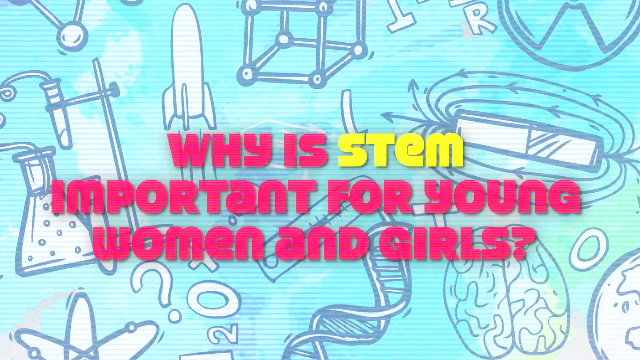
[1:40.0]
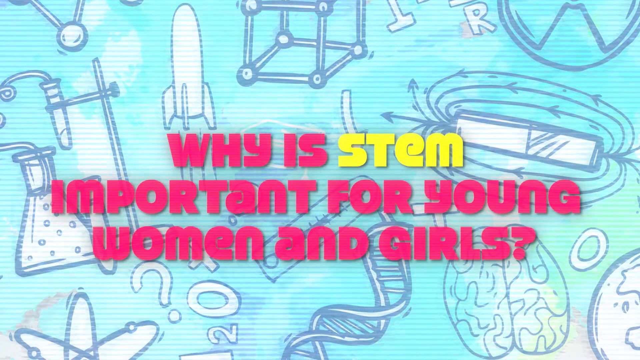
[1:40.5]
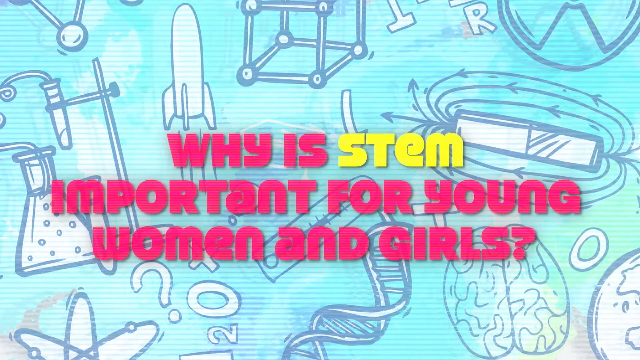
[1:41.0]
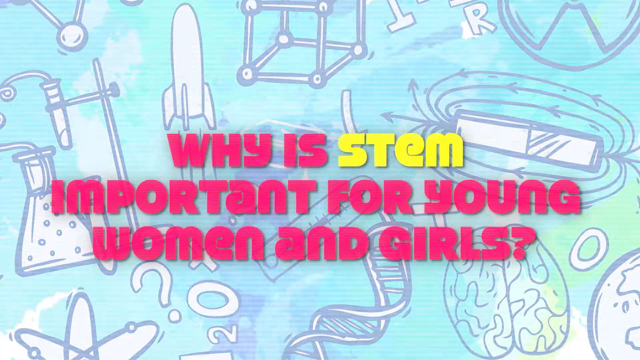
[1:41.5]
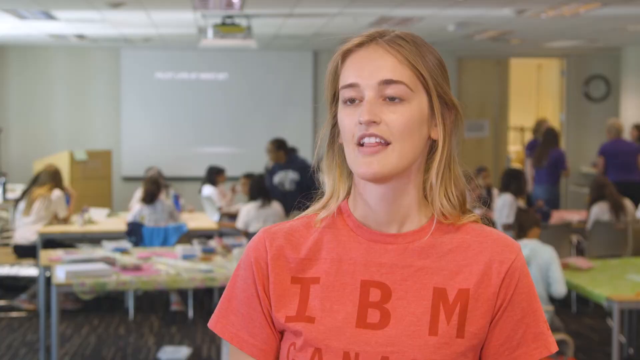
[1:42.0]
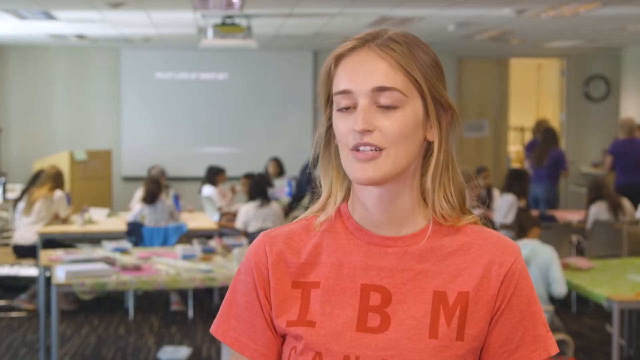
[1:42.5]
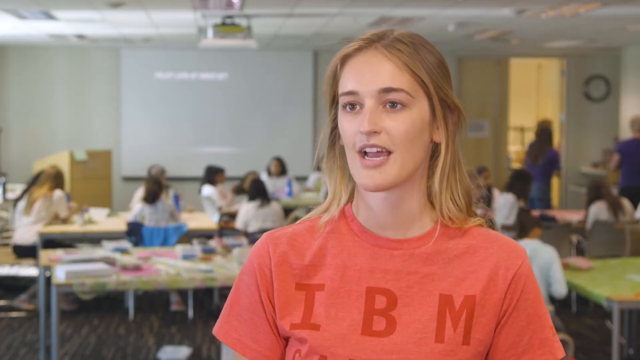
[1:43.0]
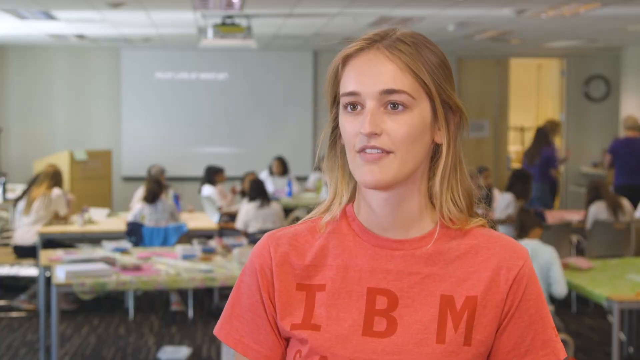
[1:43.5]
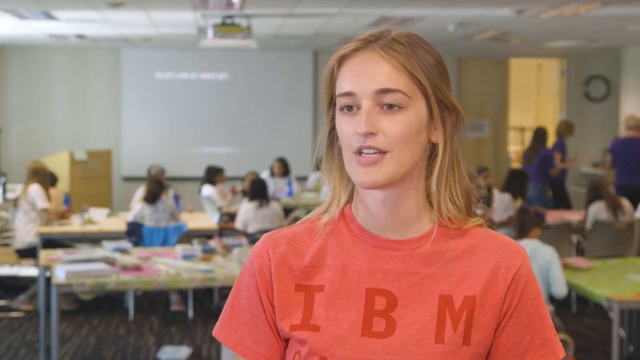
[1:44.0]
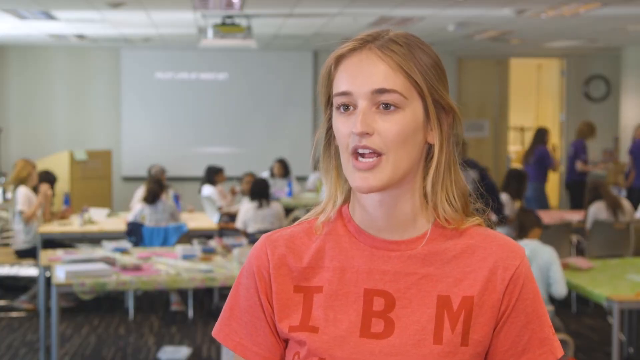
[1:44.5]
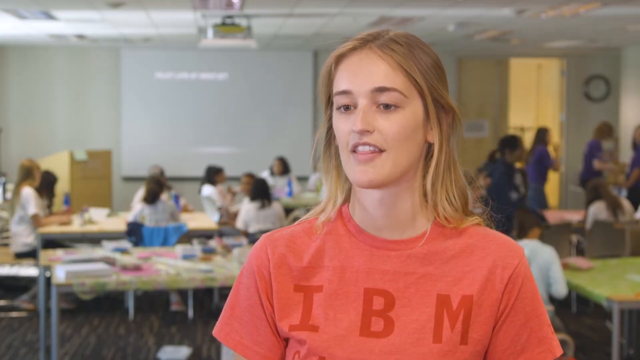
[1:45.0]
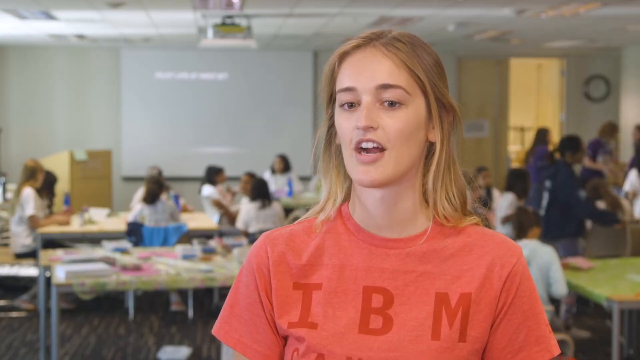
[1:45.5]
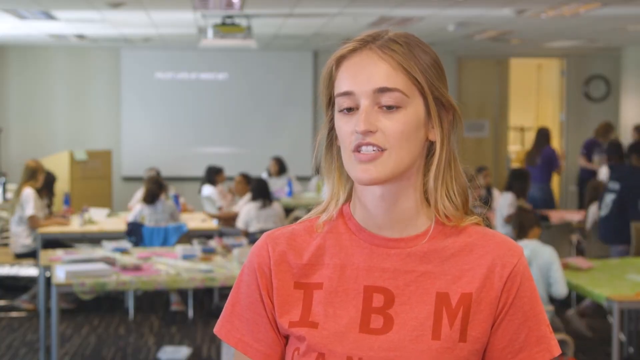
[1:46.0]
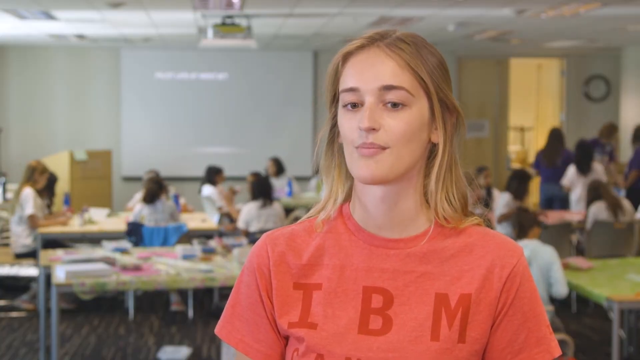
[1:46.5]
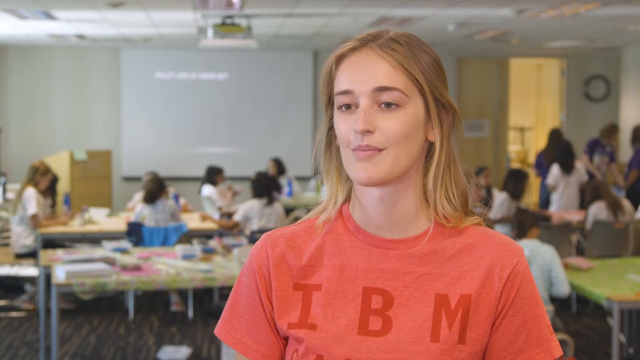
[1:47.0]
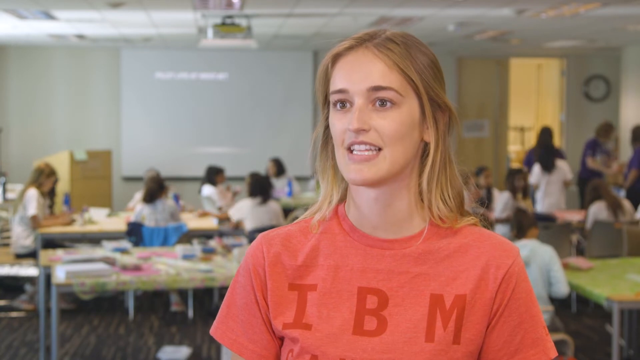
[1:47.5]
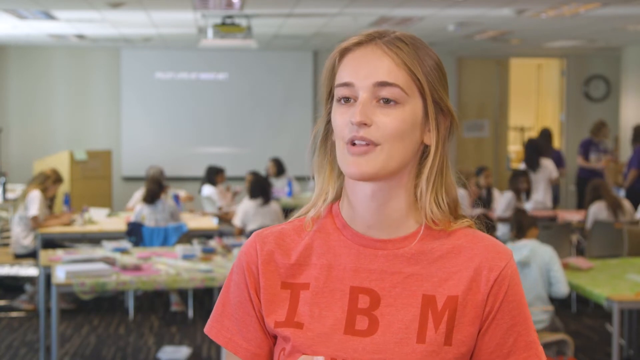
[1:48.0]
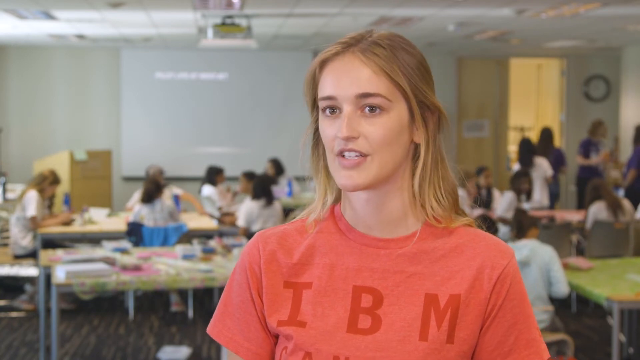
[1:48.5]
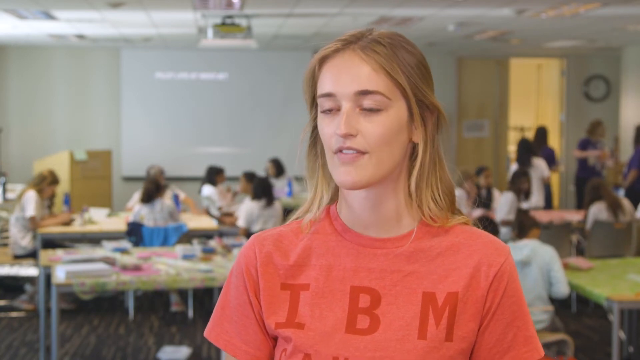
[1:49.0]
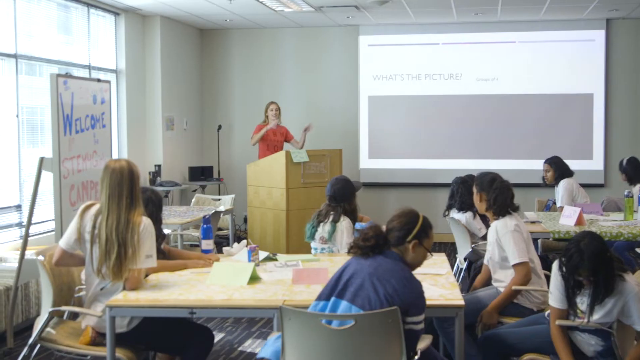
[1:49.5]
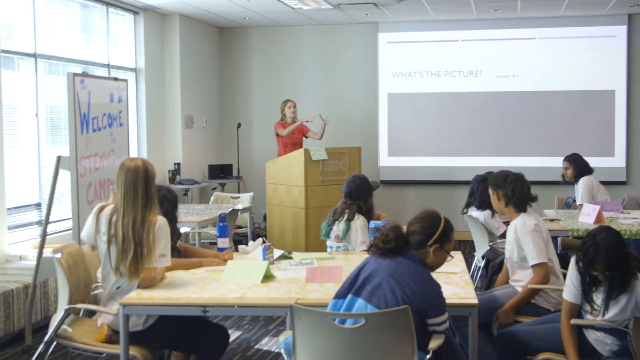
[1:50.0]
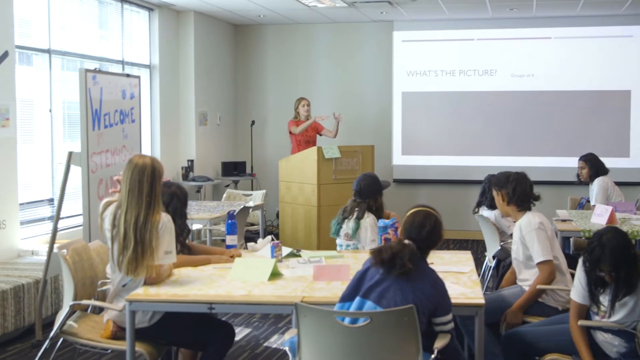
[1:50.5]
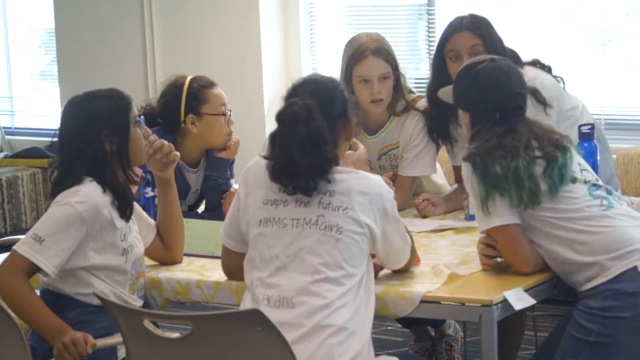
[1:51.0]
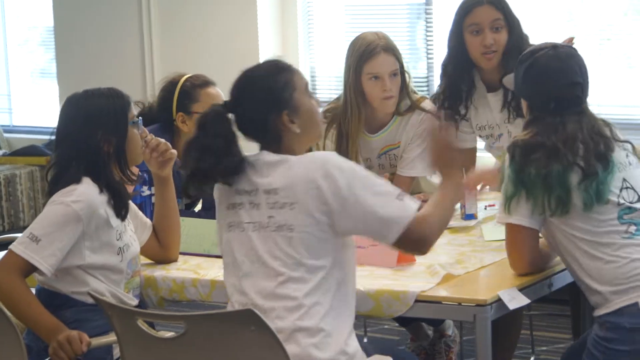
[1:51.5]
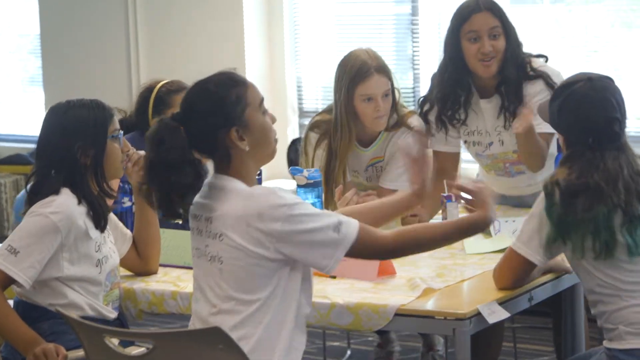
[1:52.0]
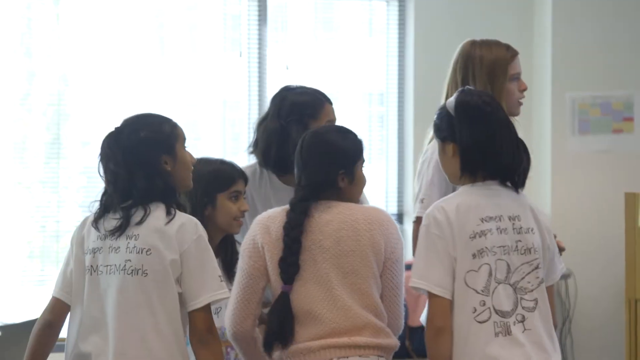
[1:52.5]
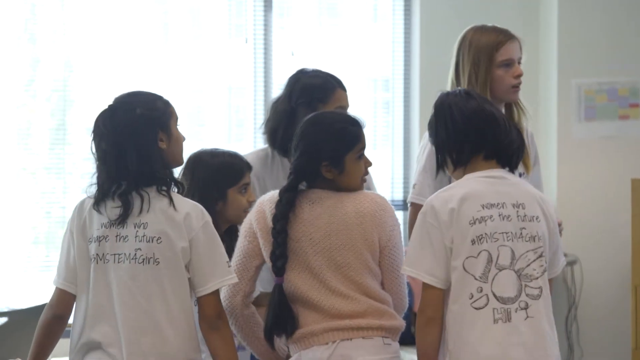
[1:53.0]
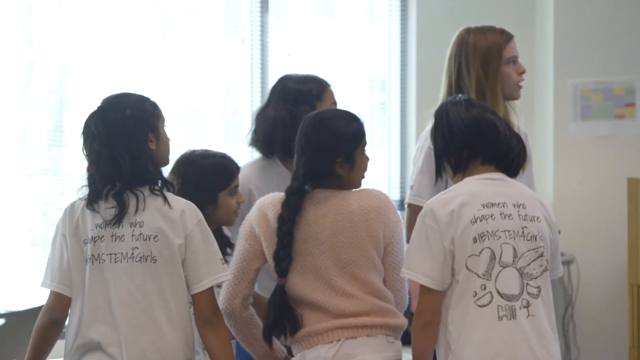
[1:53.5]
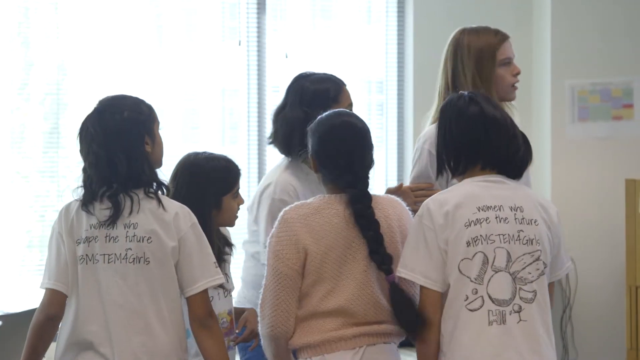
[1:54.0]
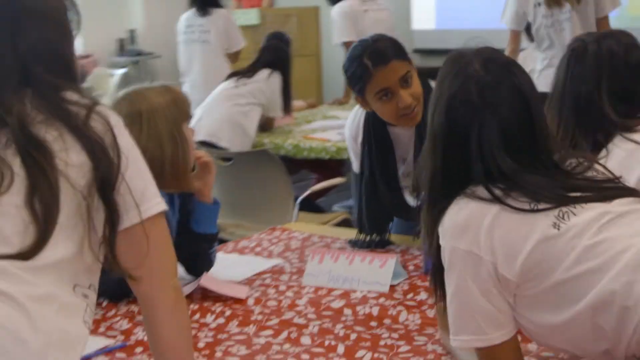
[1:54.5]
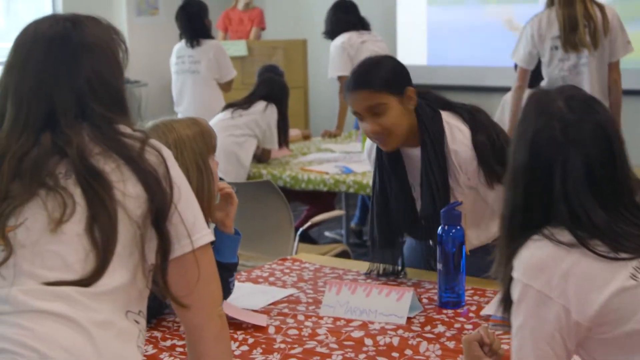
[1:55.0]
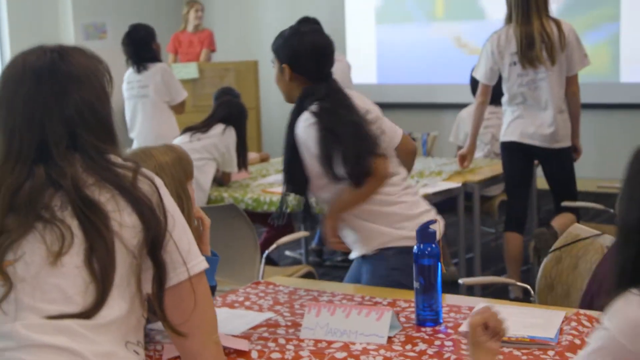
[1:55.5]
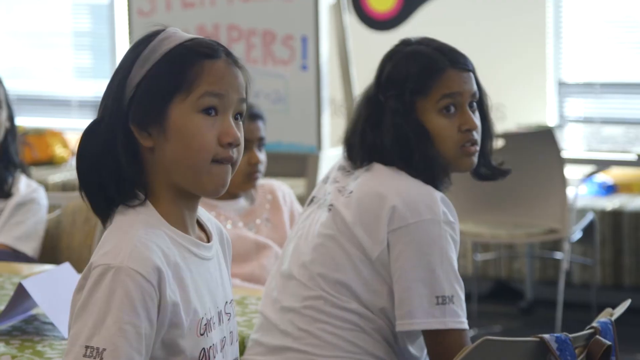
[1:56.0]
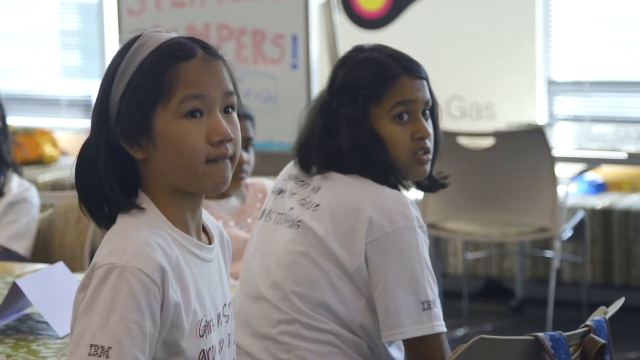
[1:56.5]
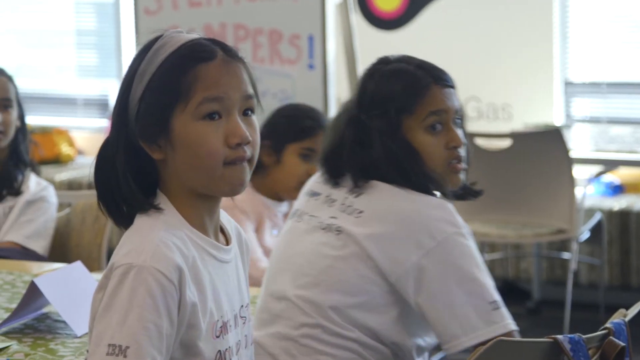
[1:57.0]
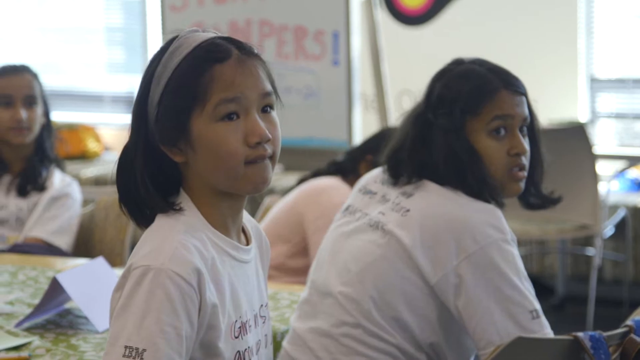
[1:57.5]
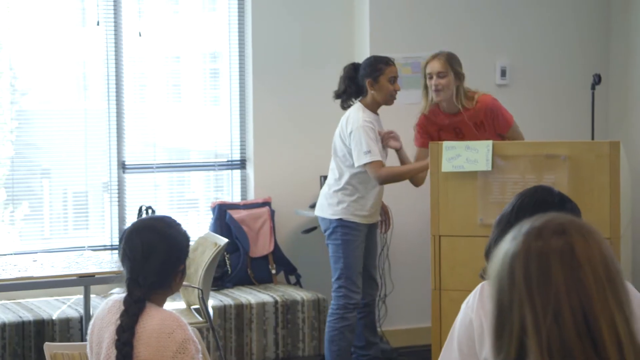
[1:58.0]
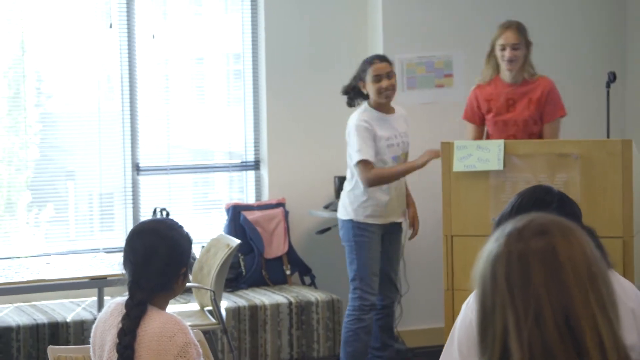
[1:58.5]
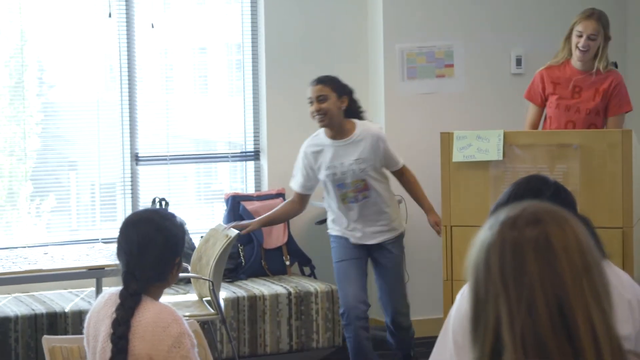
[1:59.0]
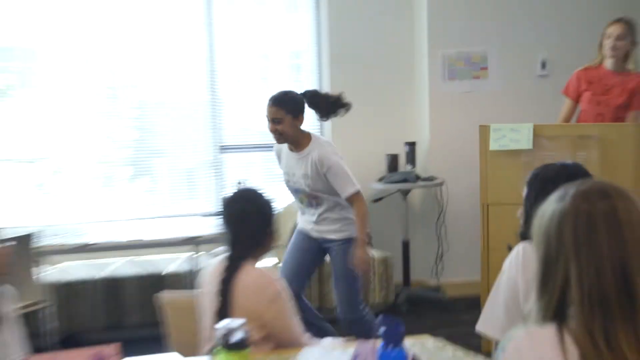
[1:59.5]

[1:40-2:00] A light blue pencil drawing shows rockets, beakers, test tubes, a DNA strand, arrows, a plus sign, and things showing magnetic fields and formulas. Purple text on the front reads "why is STEM important for young women and girls," with the word "STEM" in bold yellow. The video goes to a science lab or classroom for elementary children, with many children inside. A young white woman of about 25 with long blonde hair and brown eyes, in a salmon-colored shirt that says "IBM," speaks to the children. The camera changes directions inside the lab, where there is much activity and excitement. A girl runs to the podium and back to the table, and the video stops on "why is STEM important for young girls and young women."